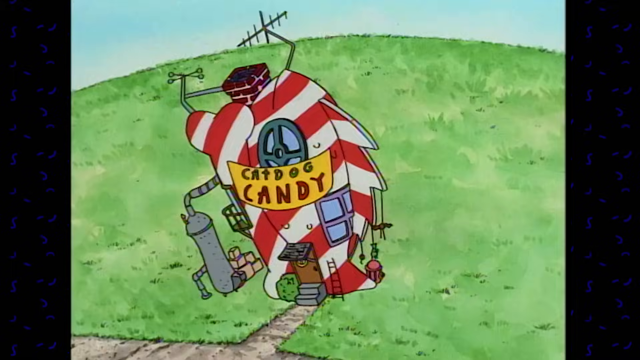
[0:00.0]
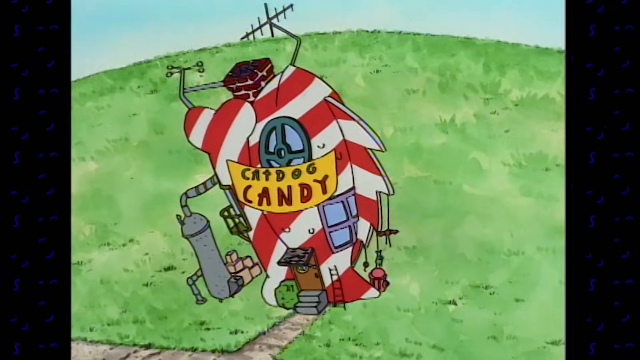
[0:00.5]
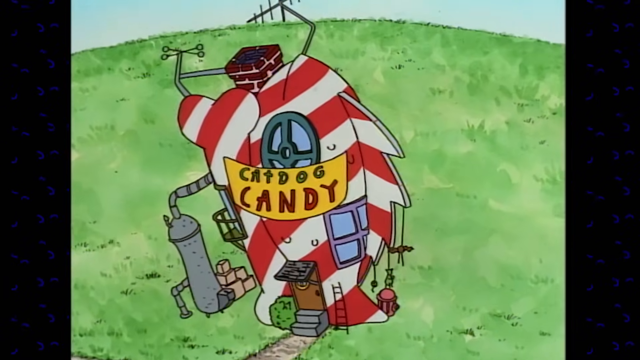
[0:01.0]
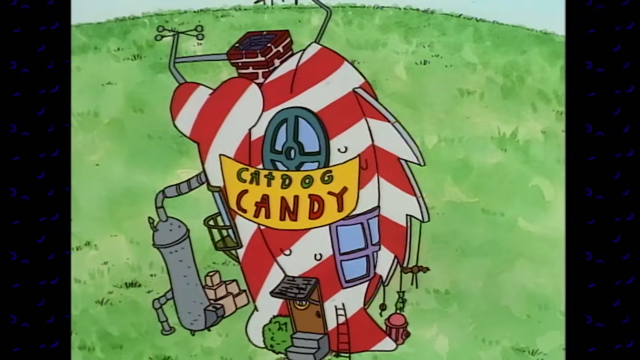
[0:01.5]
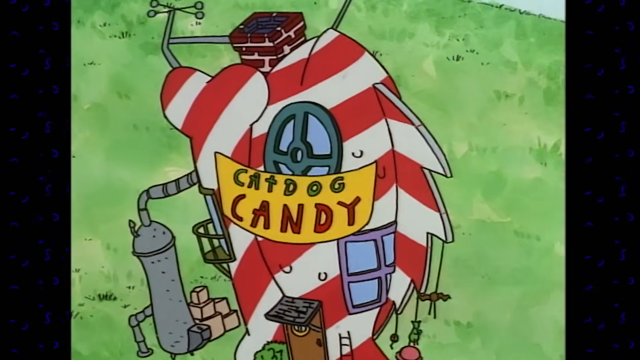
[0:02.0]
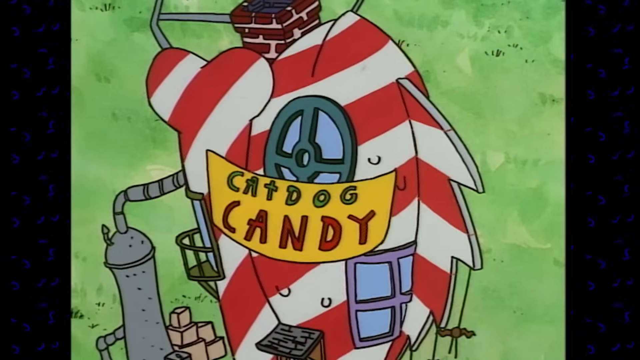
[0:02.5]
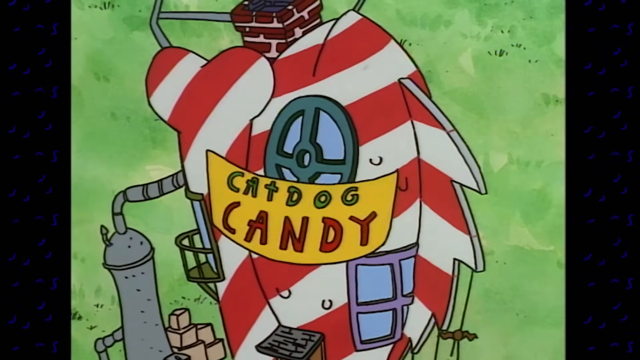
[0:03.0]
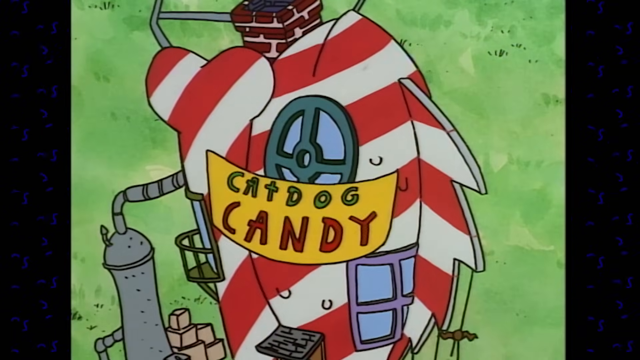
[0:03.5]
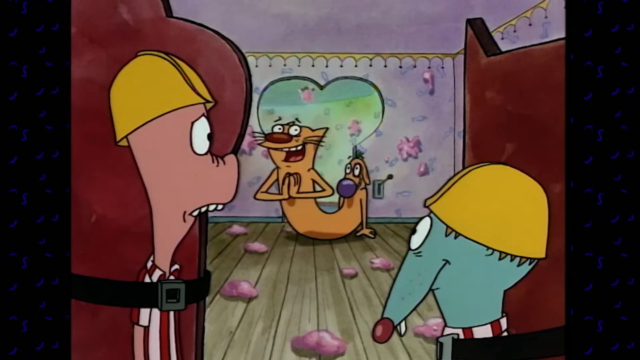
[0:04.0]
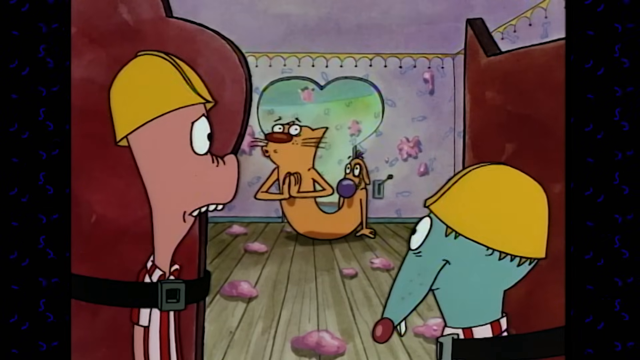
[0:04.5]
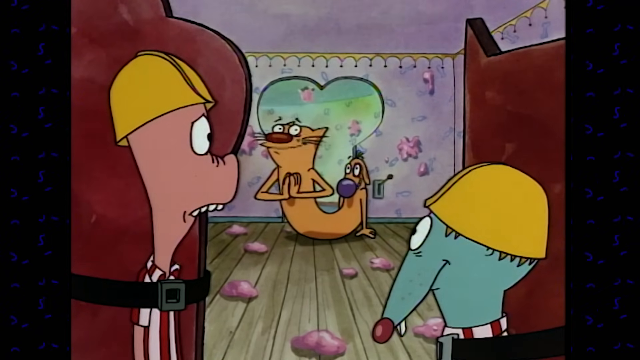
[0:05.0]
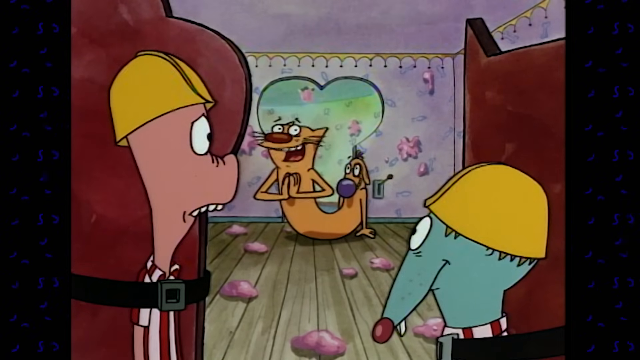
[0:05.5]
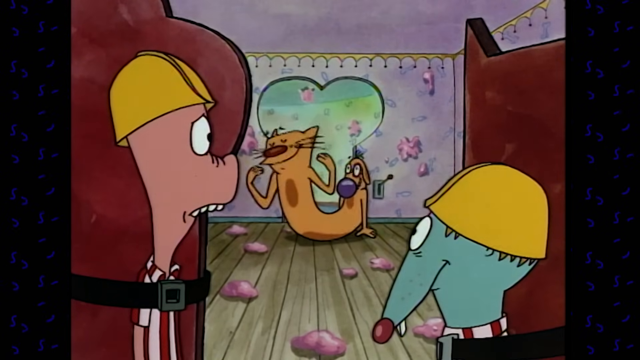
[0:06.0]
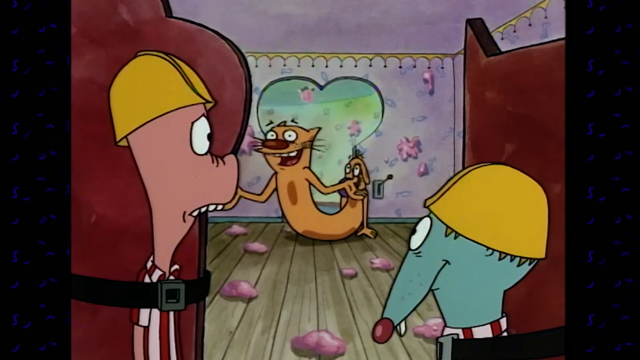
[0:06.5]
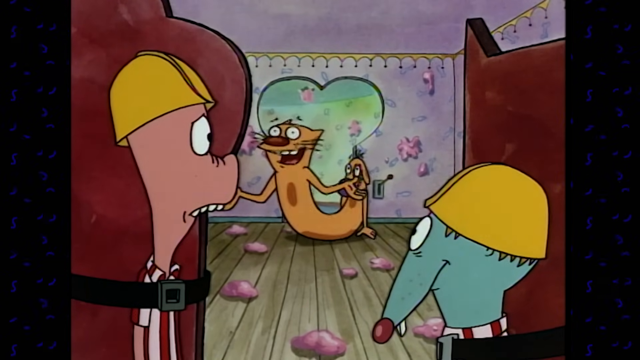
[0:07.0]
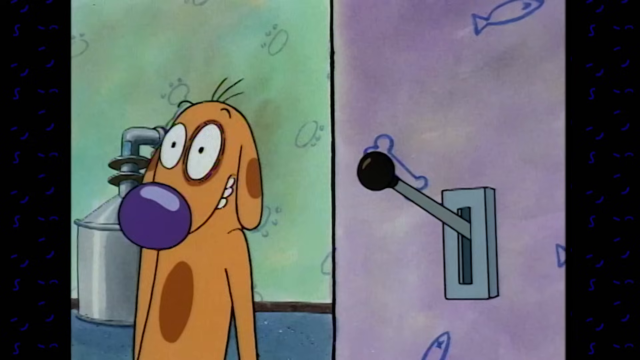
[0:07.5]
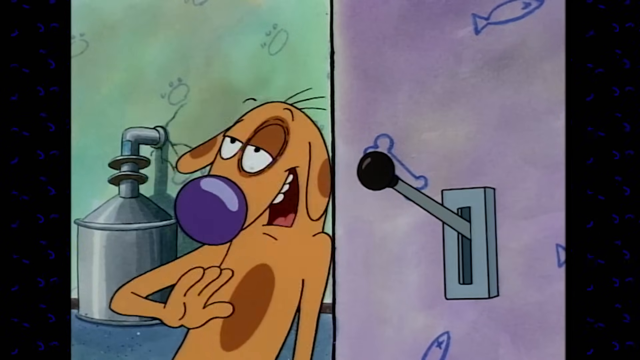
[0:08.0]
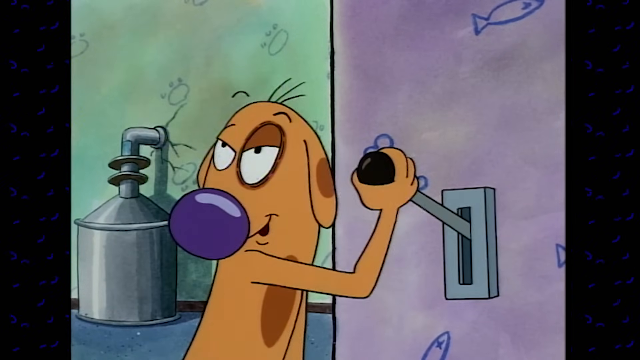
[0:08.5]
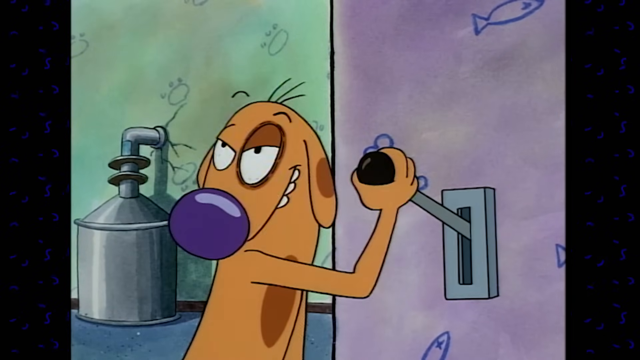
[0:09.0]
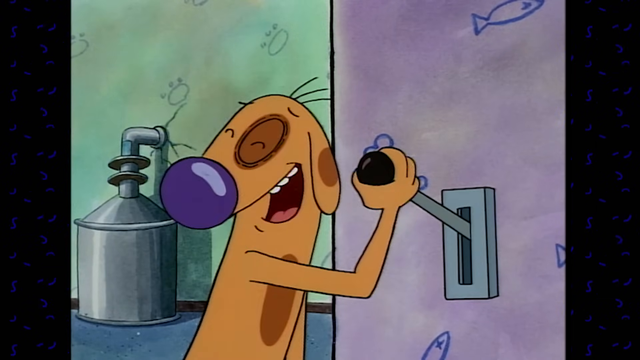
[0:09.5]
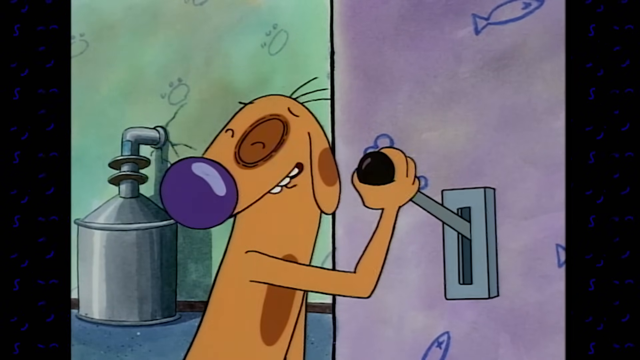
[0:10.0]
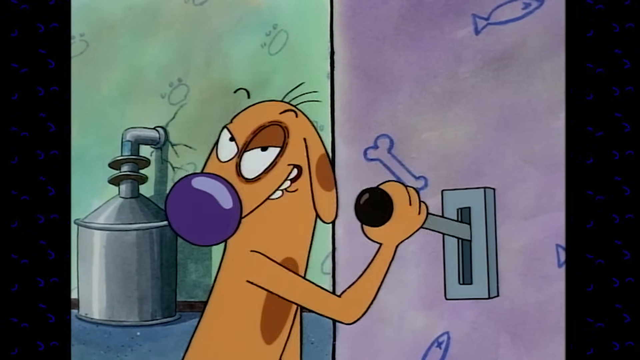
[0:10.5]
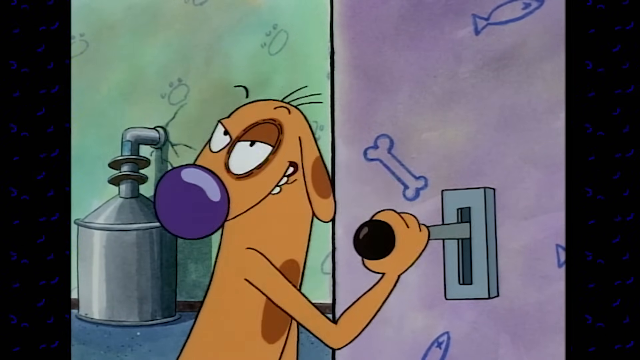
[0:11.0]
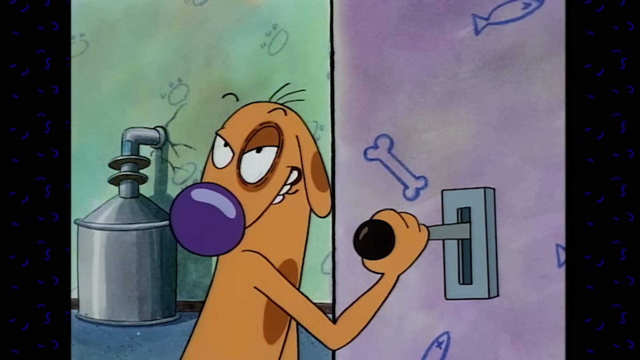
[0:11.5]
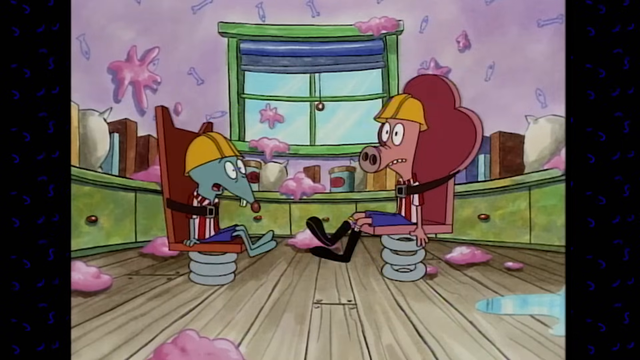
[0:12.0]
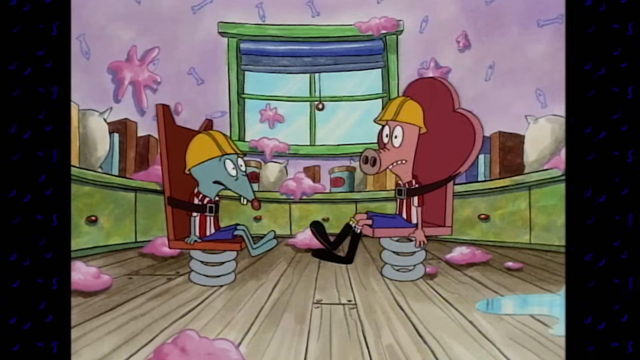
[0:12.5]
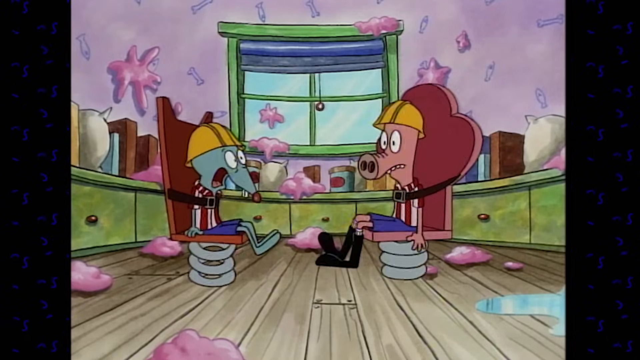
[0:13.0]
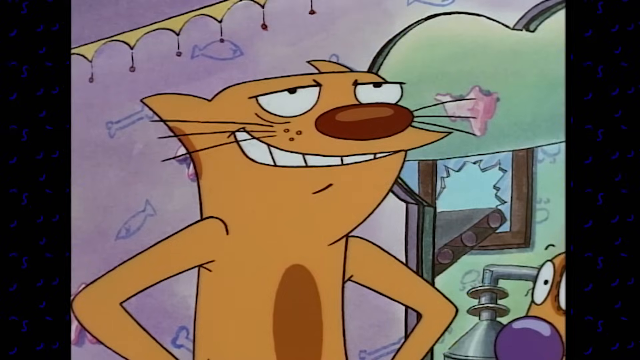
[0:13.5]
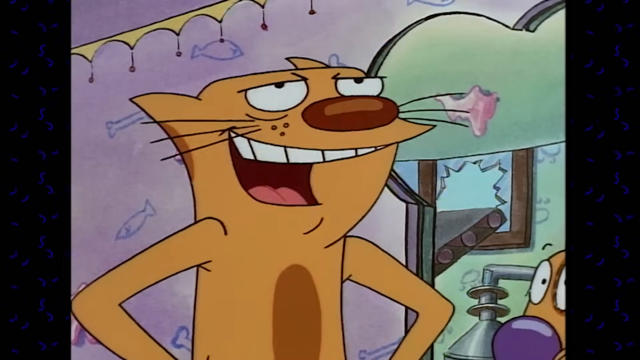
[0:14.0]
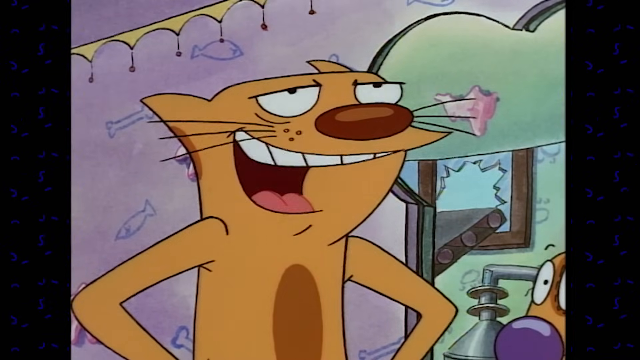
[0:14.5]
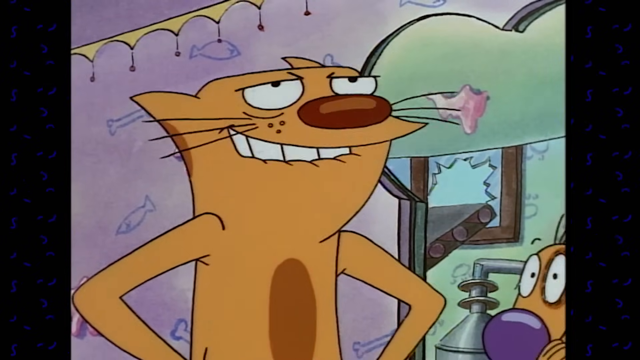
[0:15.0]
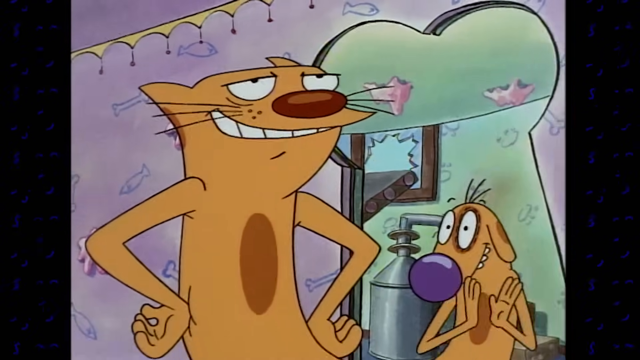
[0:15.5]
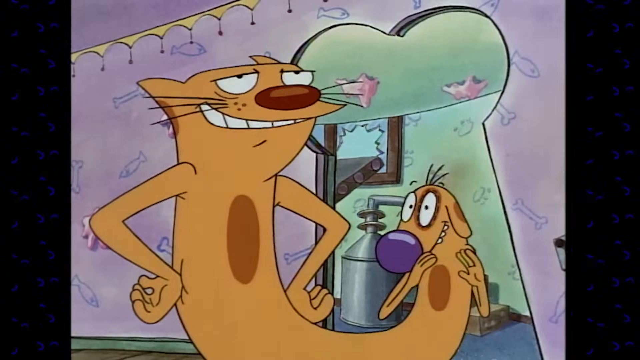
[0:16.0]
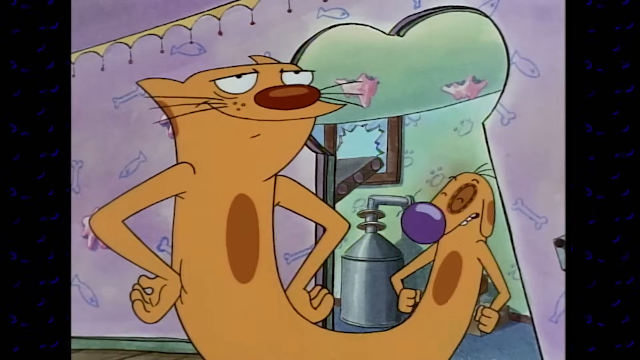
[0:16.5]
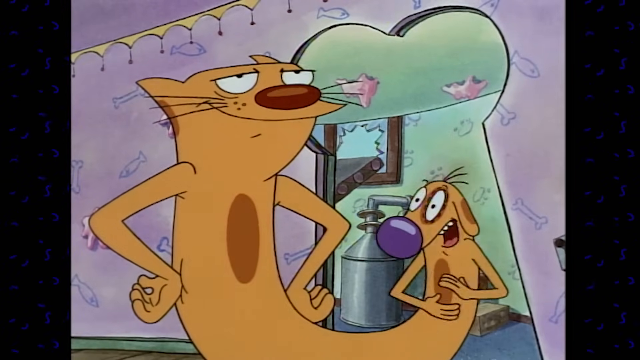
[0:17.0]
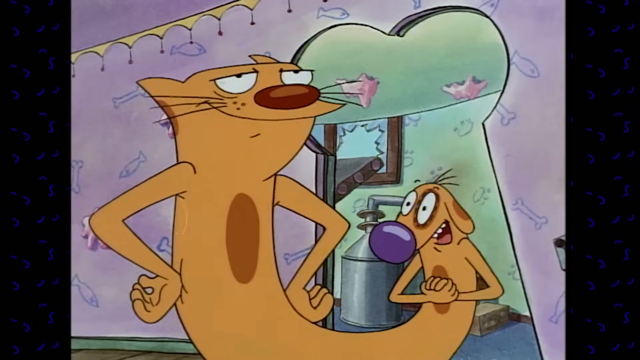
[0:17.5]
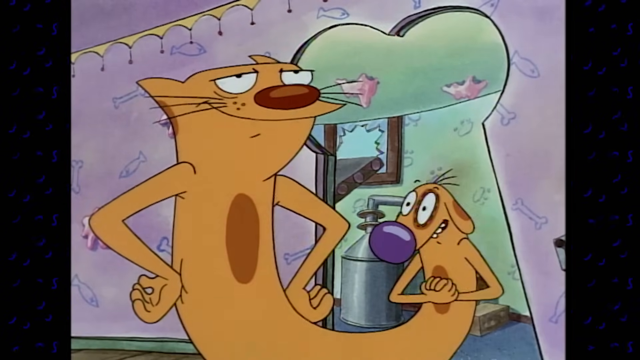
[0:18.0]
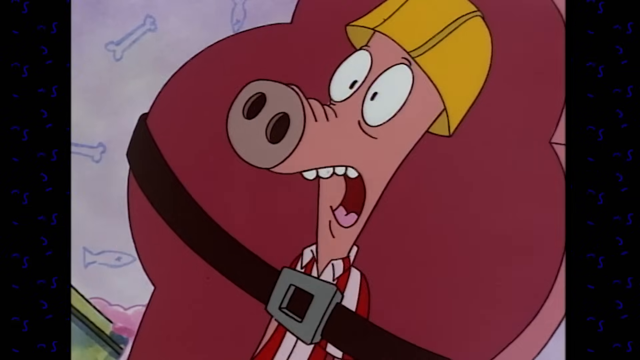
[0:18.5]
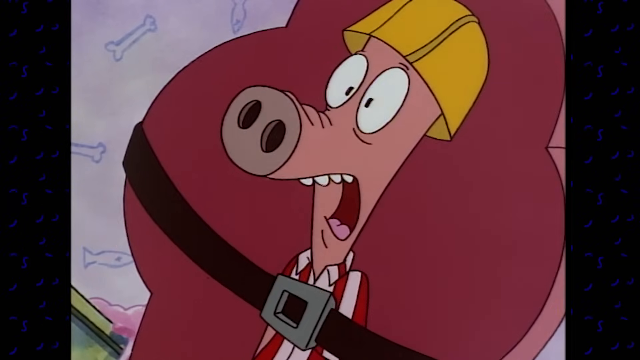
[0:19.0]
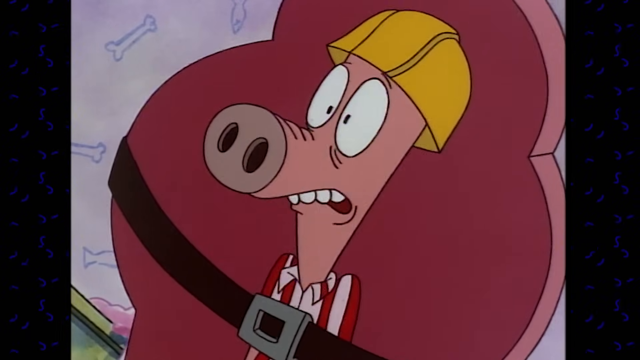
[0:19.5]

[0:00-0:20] The video opens on a picture of a hill with a house on it that looks more like a rocket than a house. It is very colorful, striped in red and white, and has a large banner on it that says "cat, dog, candy". The style seems comical, not clean looking, a little bit whacky. The view zooms in from the scenery so the inside of the house is visible. There are several figures inside, and they are not human. Two of them are strapped to some wooden thing and wear yellow helmets; one has a snout, and the other looks a little like a mouse, but green. The only one not strapped to anything is a combination of a cat and a dog with no underside to its body, the dog simply conjoined with the cat. They talk enthusiastically to the two strapped in, and then the dog pulls a lever with a smirk on his face. Once the lever is pulled, the two strapped figures turn out to be on chairs with springs under them, and they start wiggling up and down. Everything in the house is very comical: the door frames do not have usual door frame shapes, the colors are all off, and there is various equipment that does not seem normal for a living room.